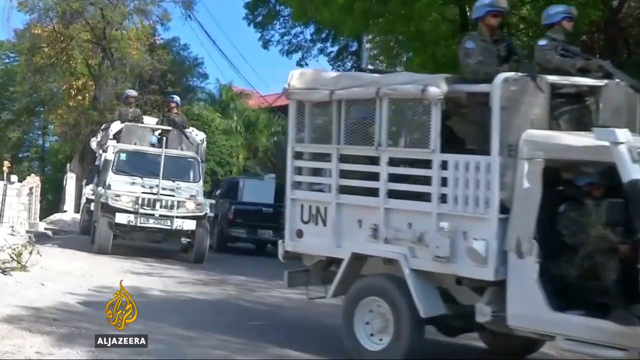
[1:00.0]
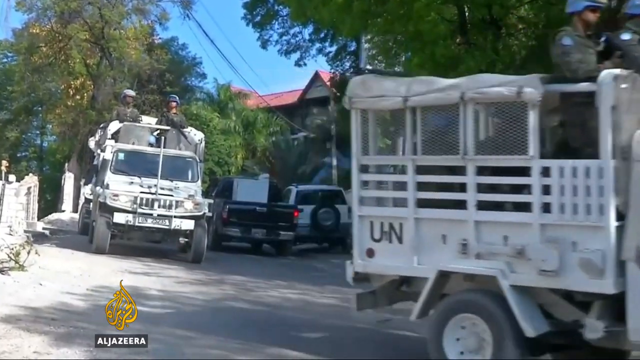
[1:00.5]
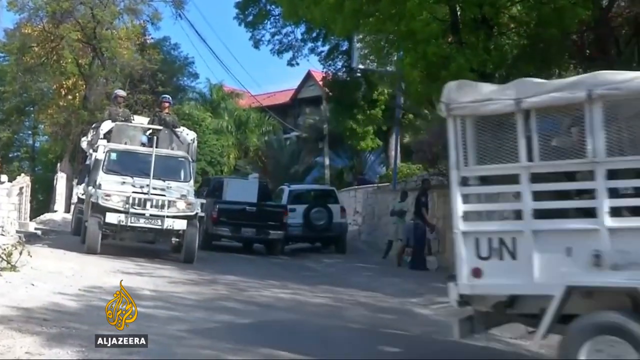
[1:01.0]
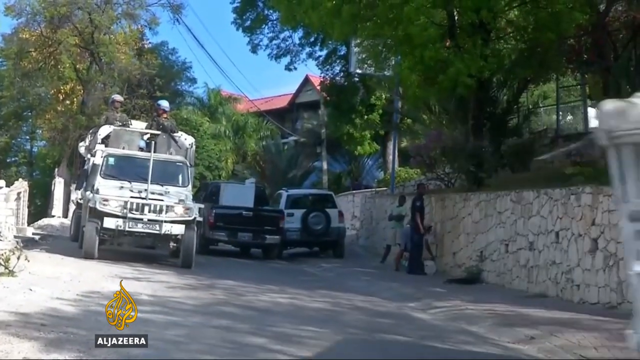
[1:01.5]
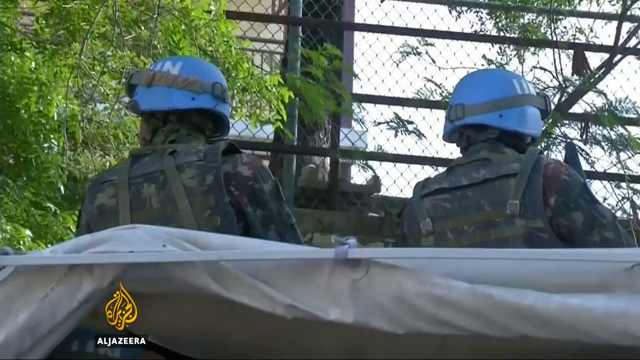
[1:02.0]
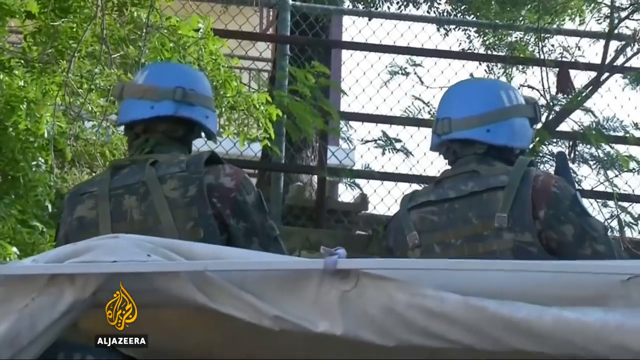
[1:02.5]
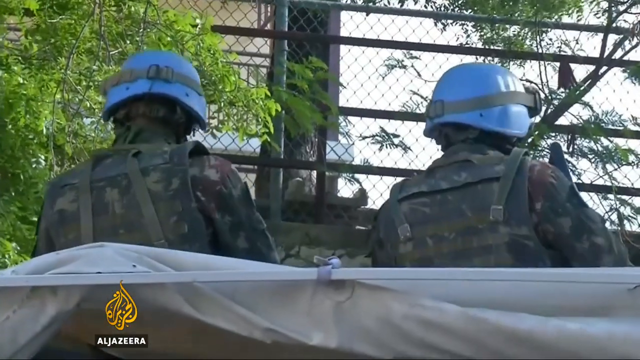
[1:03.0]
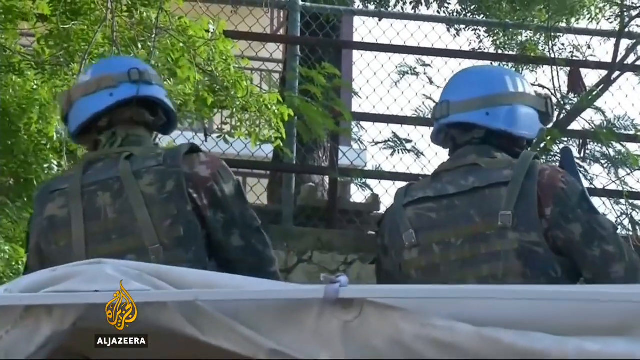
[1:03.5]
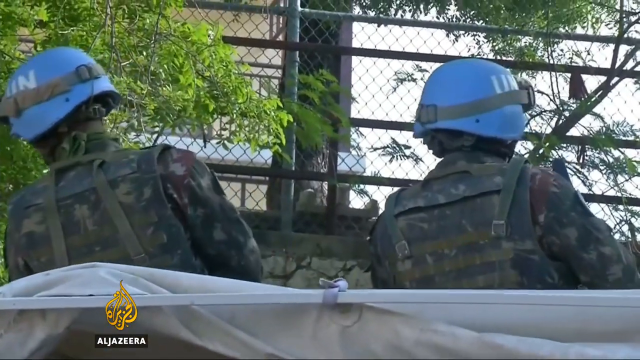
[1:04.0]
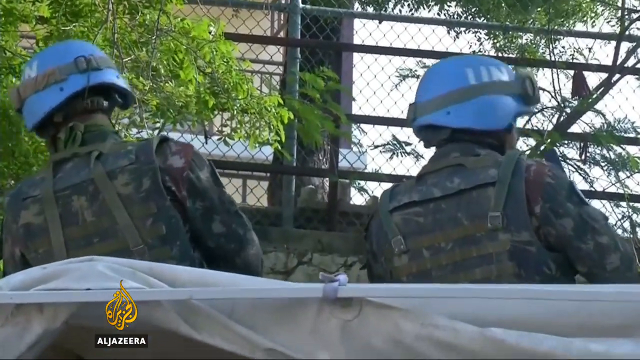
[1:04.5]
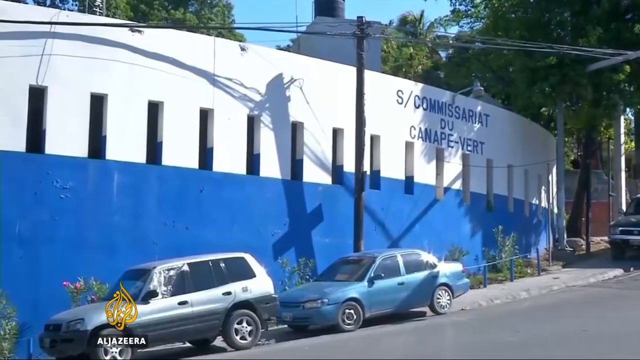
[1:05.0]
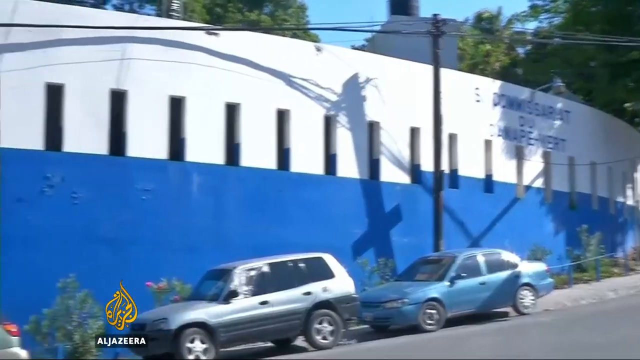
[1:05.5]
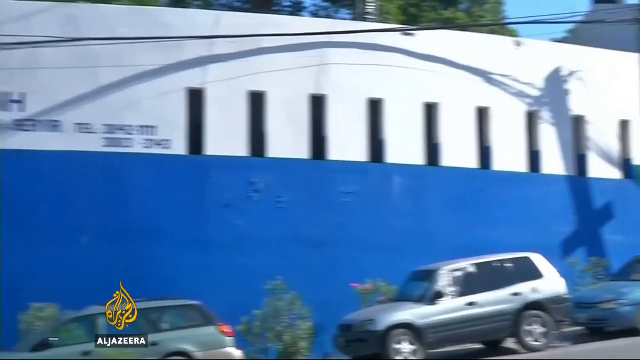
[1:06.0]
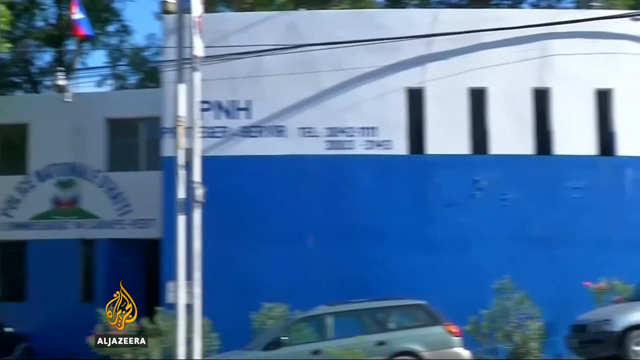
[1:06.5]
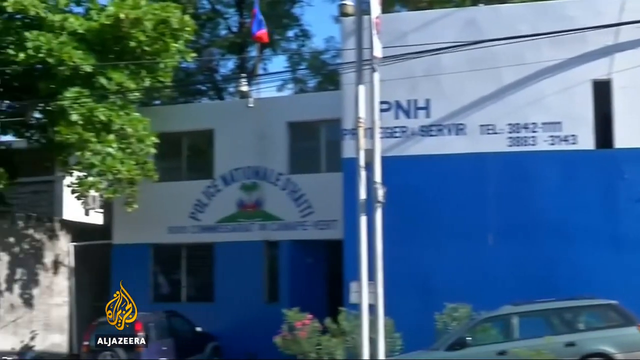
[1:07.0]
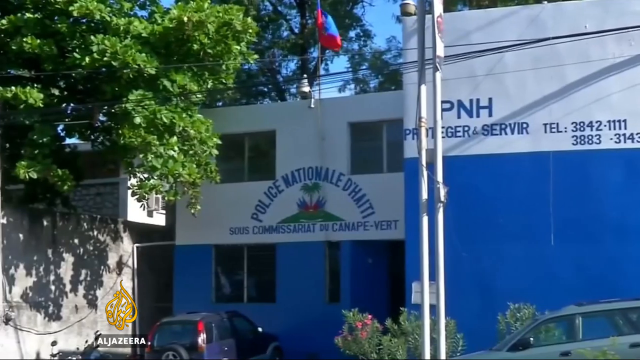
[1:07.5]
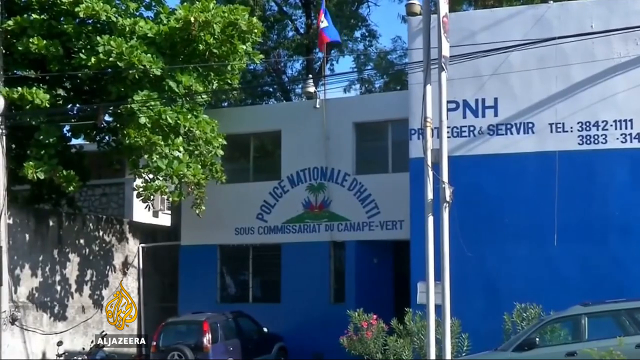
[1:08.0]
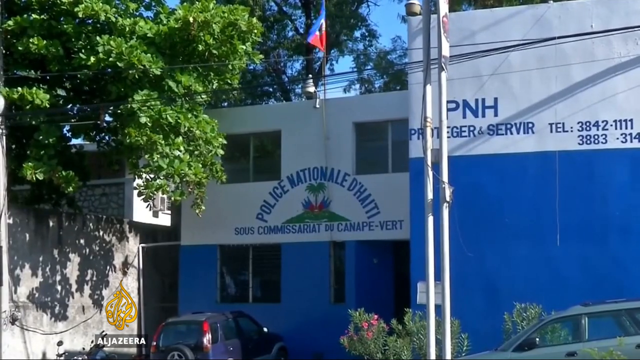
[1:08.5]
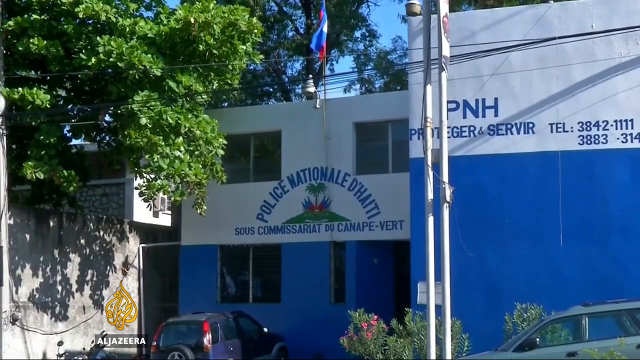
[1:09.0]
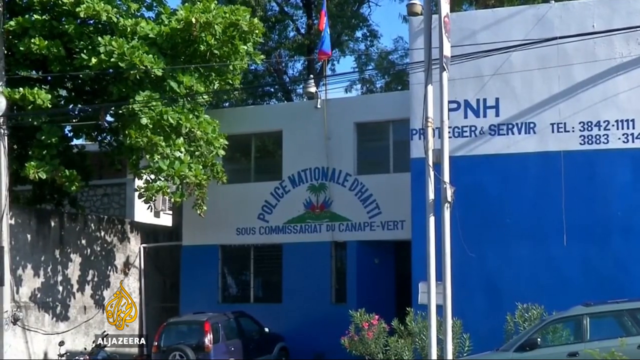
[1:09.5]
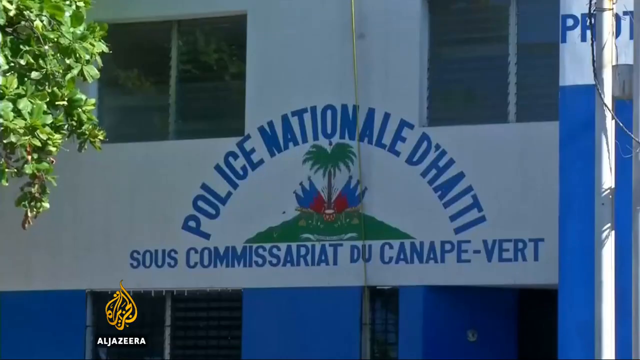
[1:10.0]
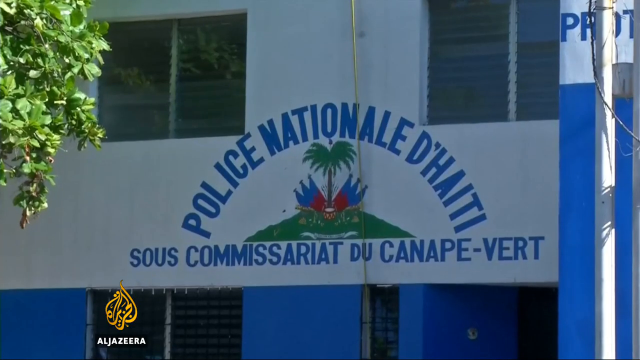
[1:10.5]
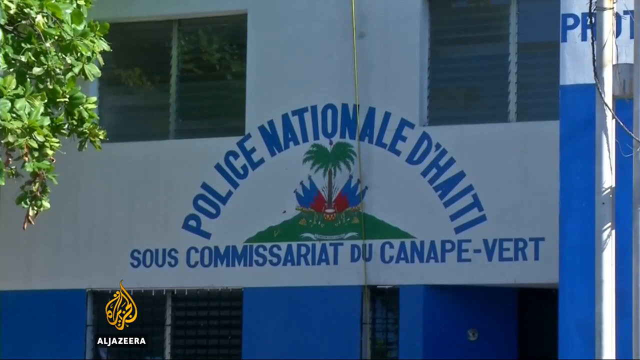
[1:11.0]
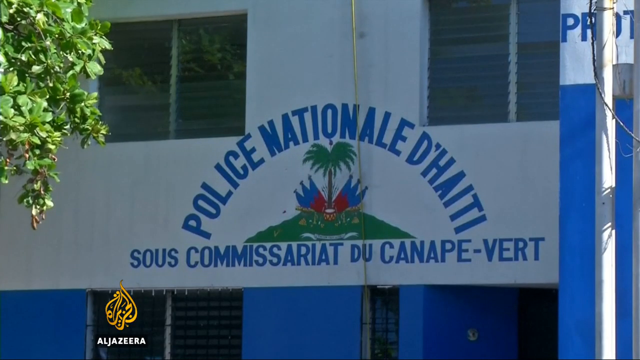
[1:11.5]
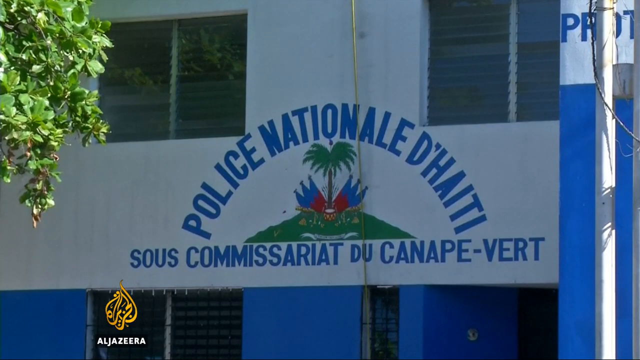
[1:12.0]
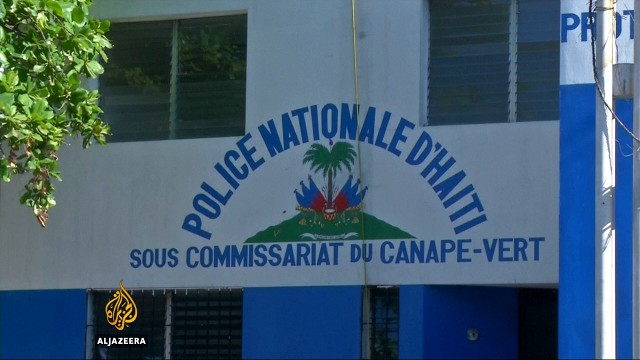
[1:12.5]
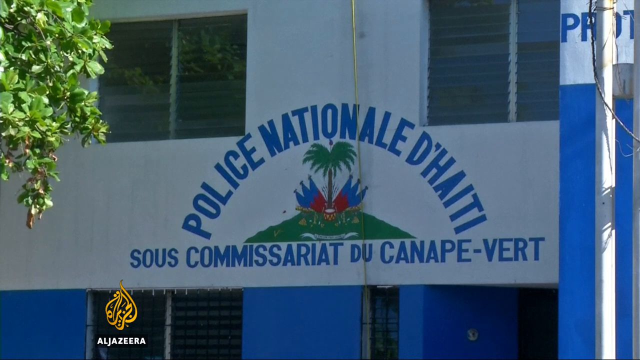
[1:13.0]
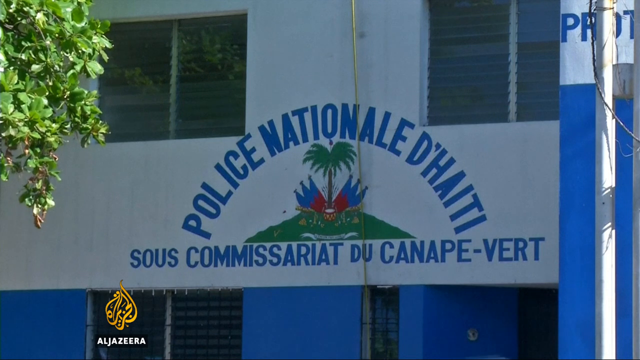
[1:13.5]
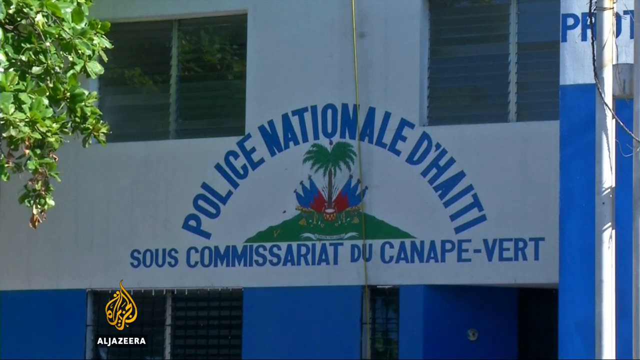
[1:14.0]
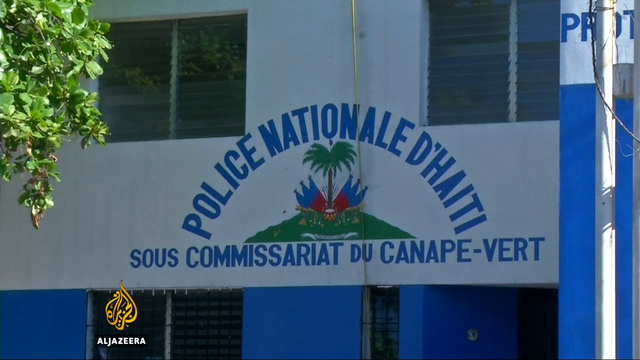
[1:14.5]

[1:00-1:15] The convoy of army men in fatigues, wearing helmets with goggles on top, is in vehicles apparently in front of the Police National de Haiti building. The building is large and very tropical blue and white, with palm trees on its logo, and what appear to be a couple of street signs and flags on top of it. Private vehicles are parked outside. There are men outside the truck as well, who look like they are probably civilians. The Al Jazeera emblem is on the video.